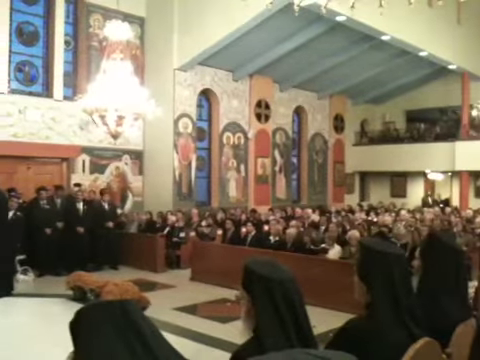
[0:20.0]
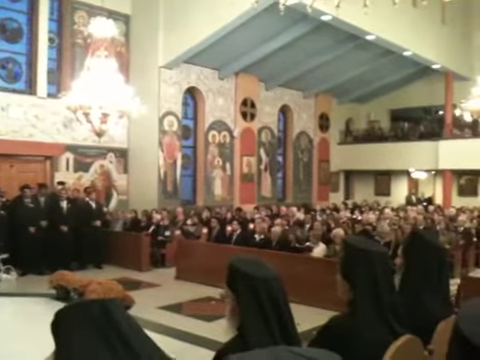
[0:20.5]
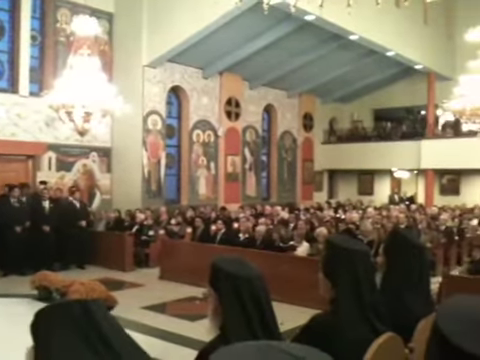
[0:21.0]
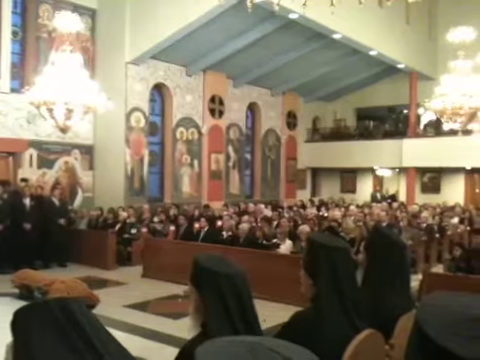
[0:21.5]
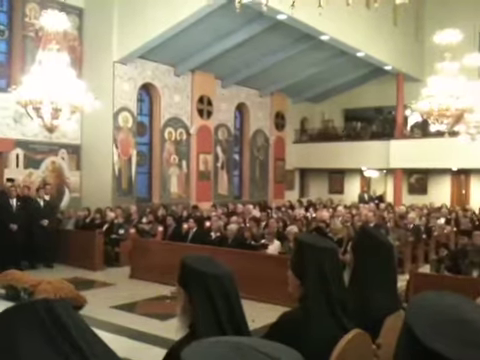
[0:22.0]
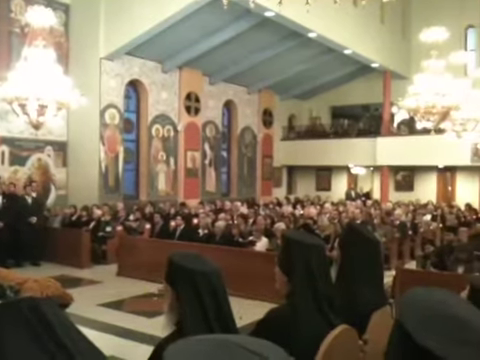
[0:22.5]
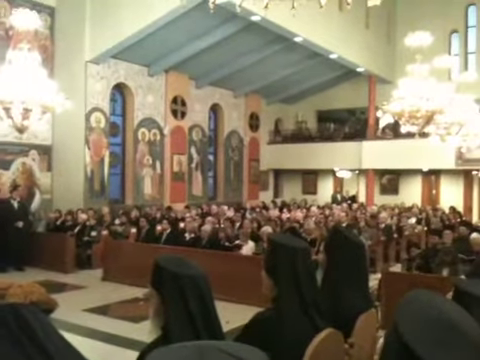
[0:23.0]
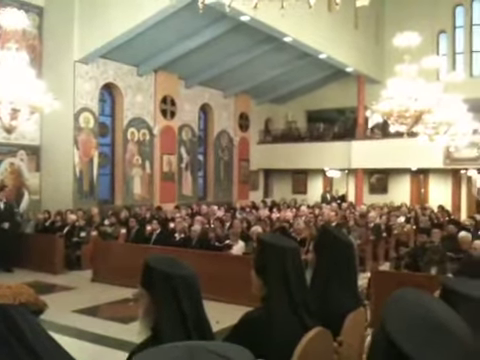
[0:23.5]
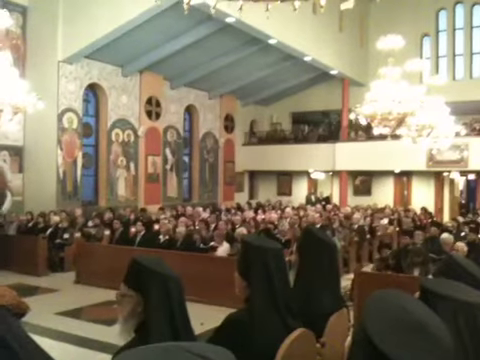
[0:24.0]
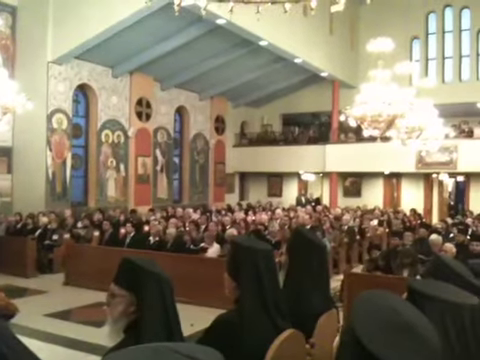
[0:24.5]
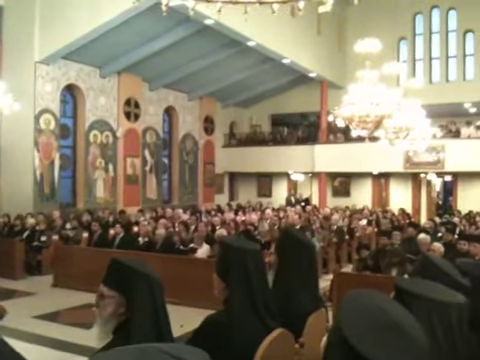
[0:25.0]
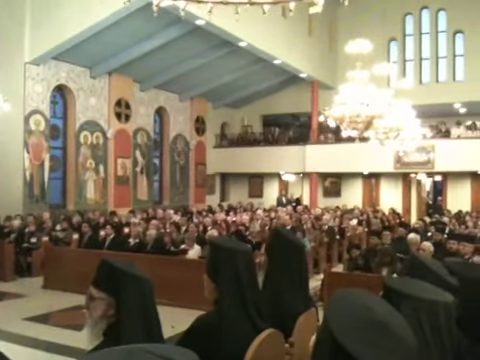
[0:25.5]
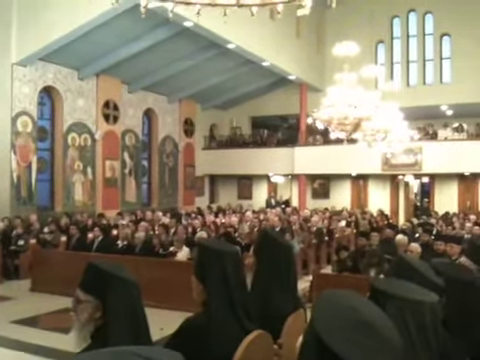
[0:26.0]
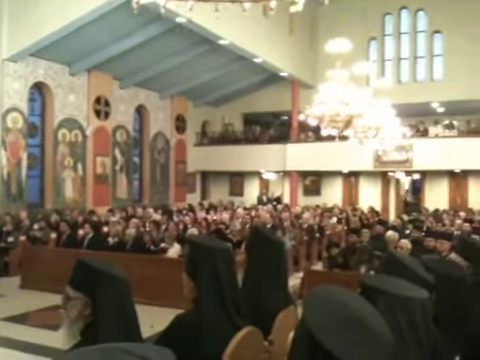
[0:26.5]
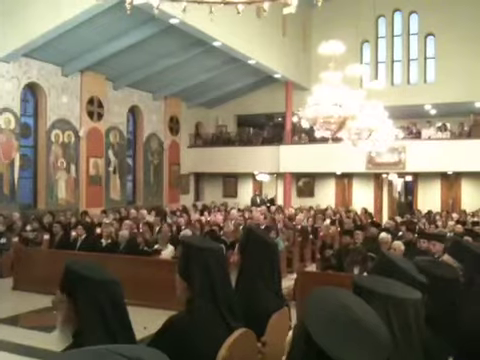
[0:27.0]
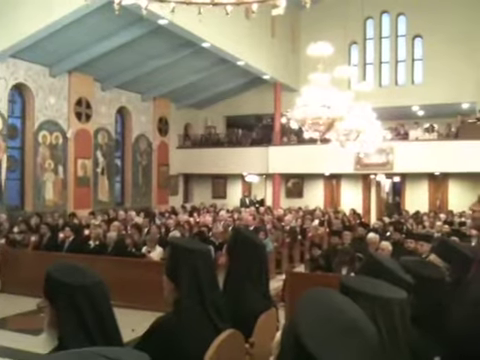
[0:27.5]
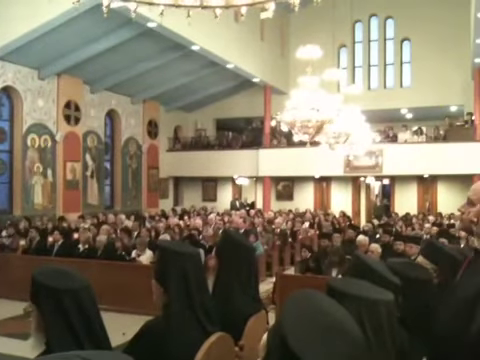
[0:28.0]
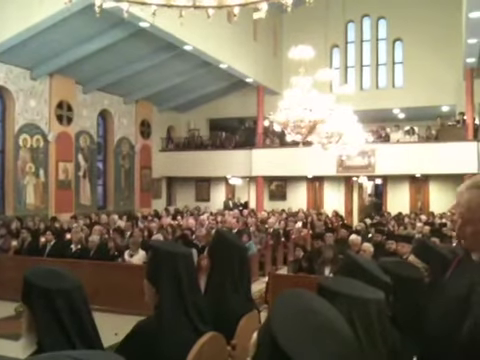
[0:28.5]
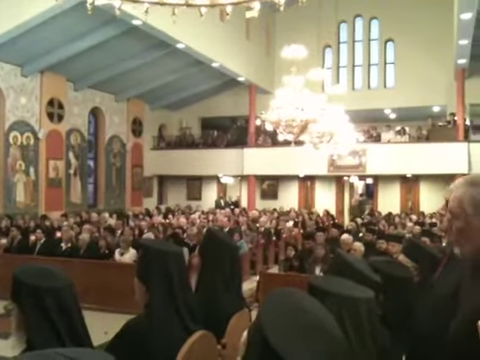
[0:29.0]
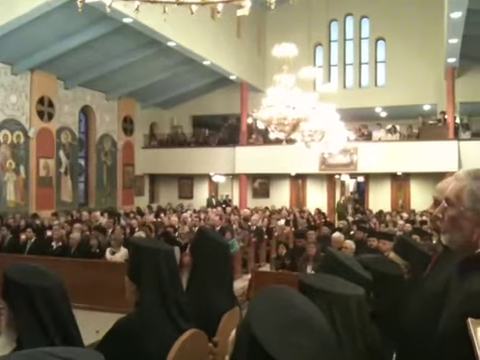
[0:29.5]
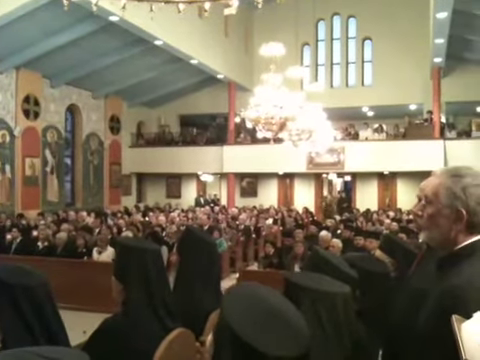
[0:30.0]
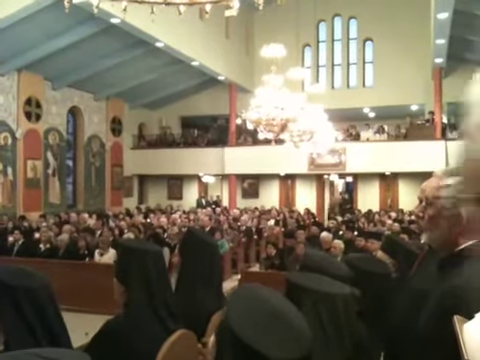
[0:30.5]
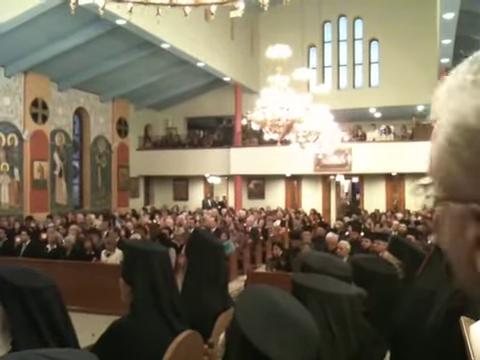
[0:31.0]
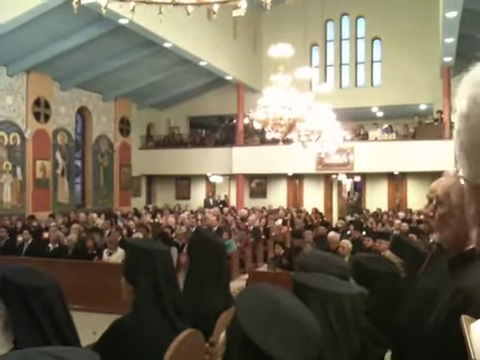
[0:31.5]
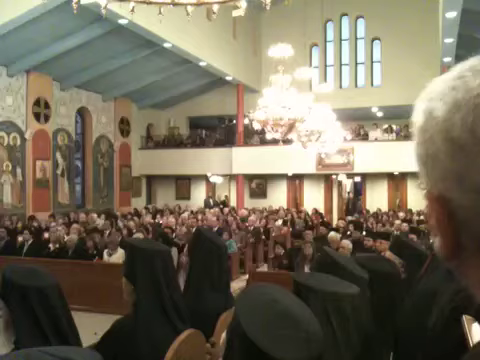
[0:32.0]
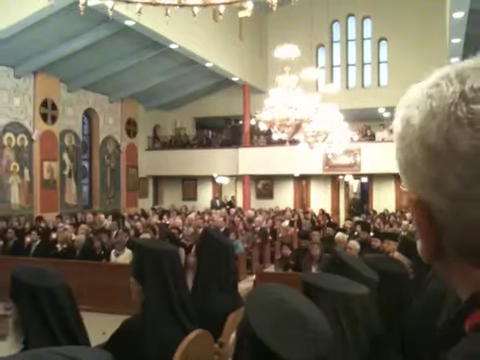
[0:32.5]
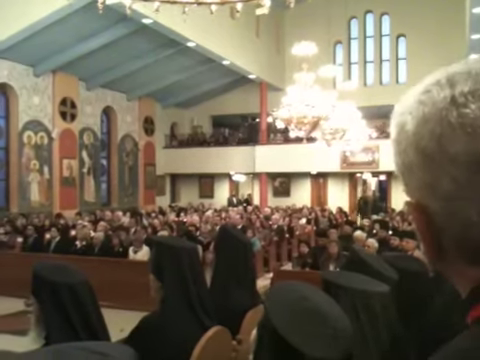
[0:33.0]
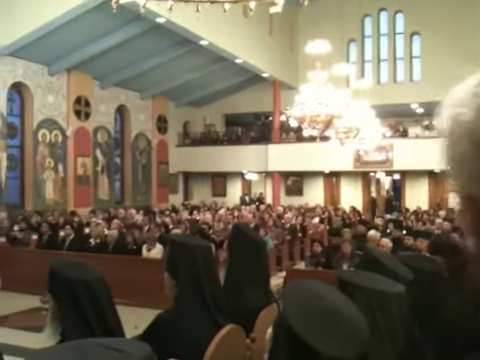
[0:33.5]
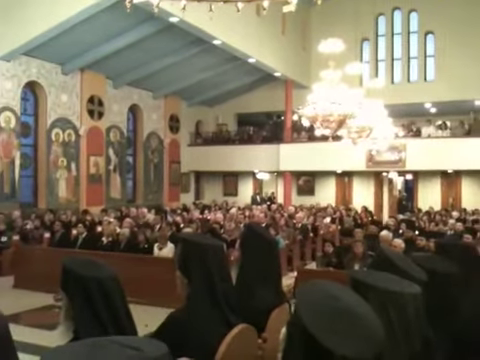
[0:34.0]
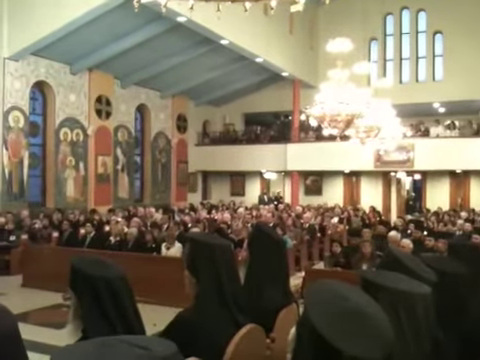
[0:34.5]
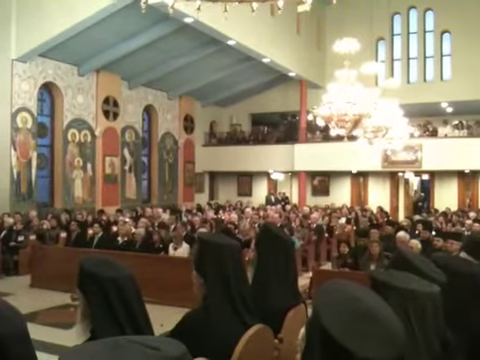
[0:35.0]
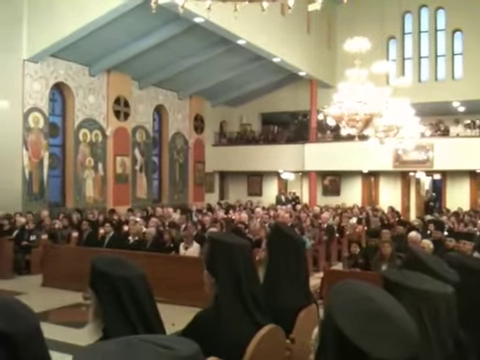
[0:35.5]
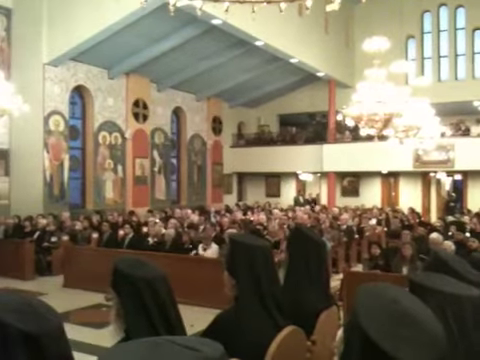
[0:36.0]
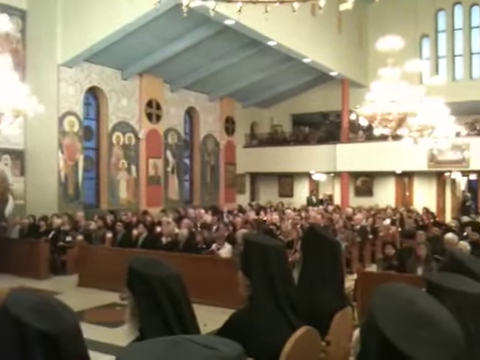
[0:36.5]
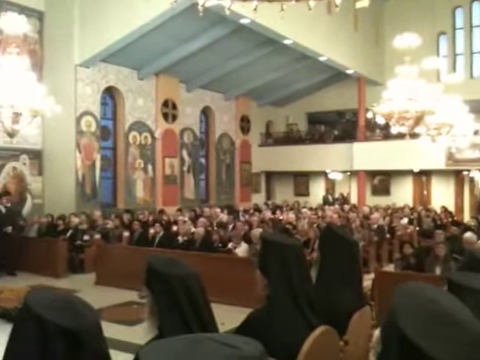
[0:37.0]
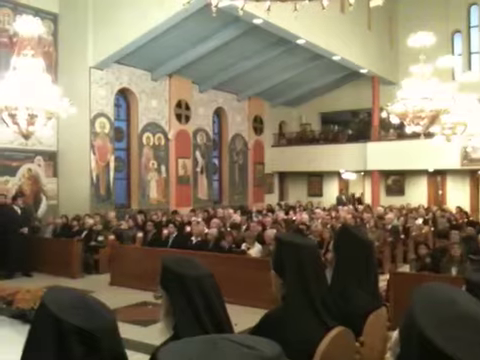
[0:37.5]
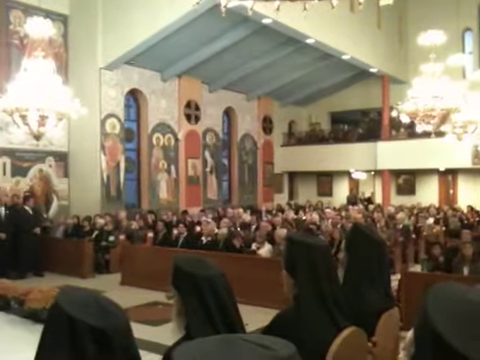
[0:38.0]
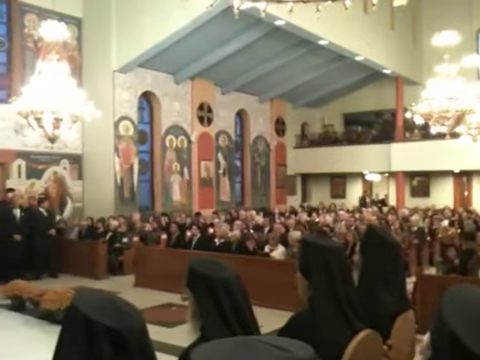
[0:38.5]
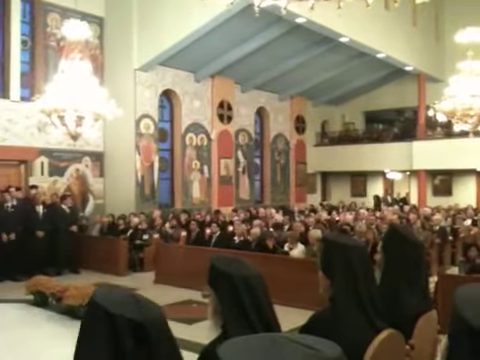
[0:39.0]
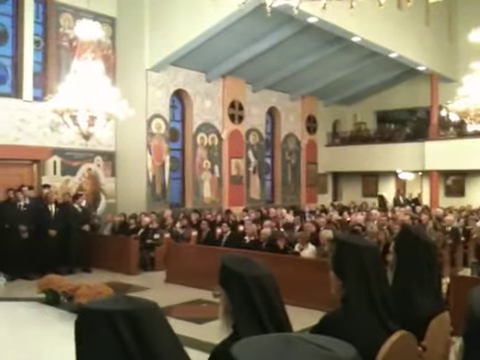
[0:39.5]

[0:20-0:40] The camera pans a bit, giving a better view from inside the congregants' area of the church and more of the seated crowd watching the ceremony. The gathering is maybe about 75 people, and a small balcony holds some additional people. The crowd looks to be very conservative and religious; everyone is dressed in dark suits and rather muted colors. A number of stained glass windows and mosaics are on the walls. The church seems reminiscent of a Greek Orthodox church, and the robes and vestments of the officiating figures appear in keeping with that. Female figures, seated on the right-hand side of the room from the viewer's perspective, are also observing the ceremony; they all wear black robes and head coverings, possibly indicating that they are nuns.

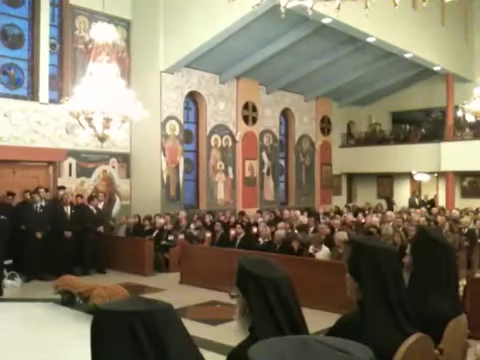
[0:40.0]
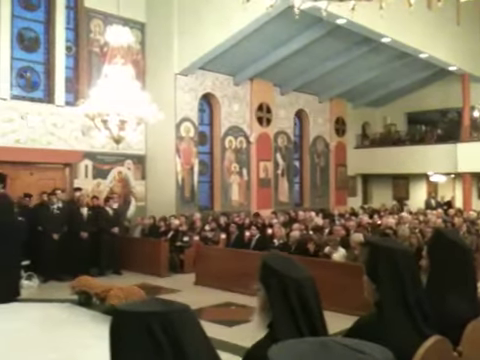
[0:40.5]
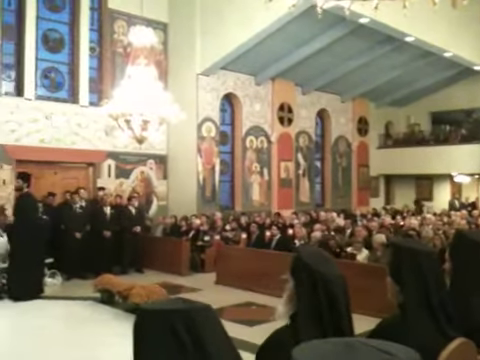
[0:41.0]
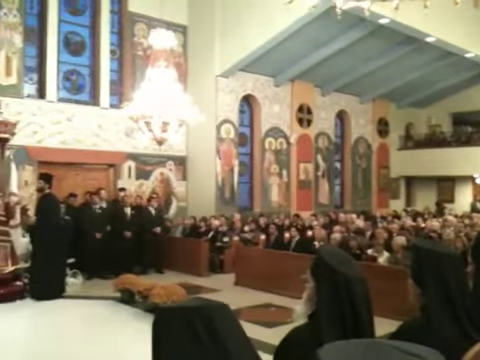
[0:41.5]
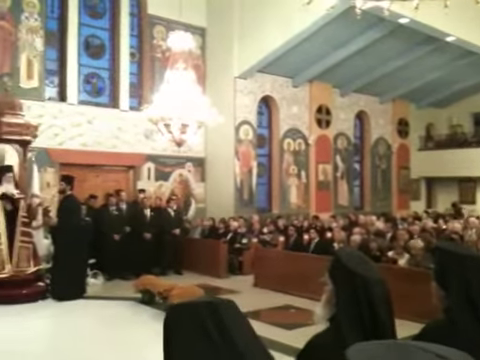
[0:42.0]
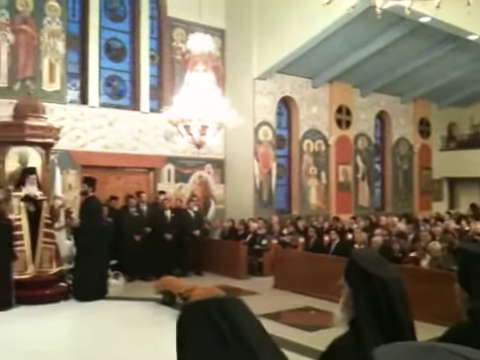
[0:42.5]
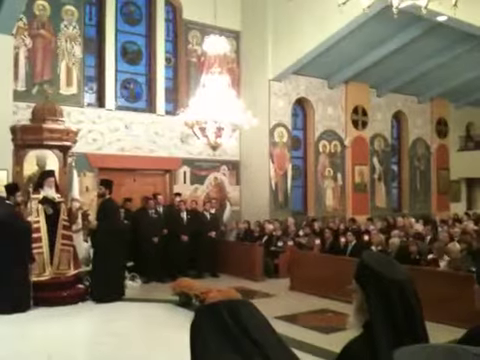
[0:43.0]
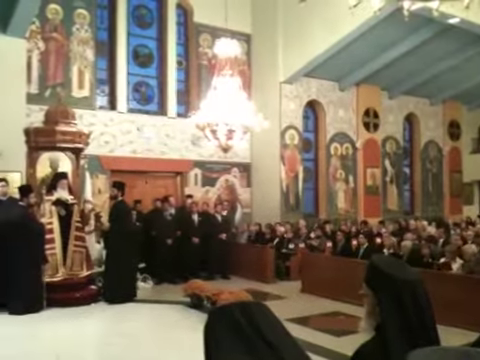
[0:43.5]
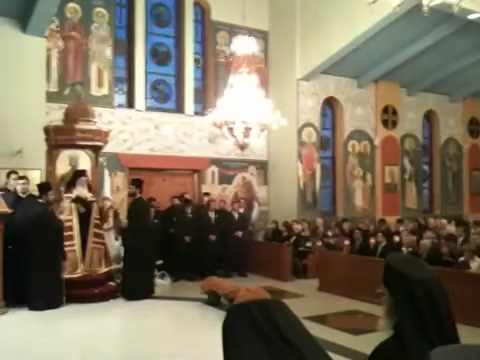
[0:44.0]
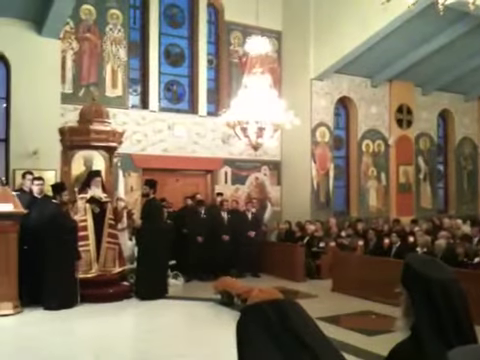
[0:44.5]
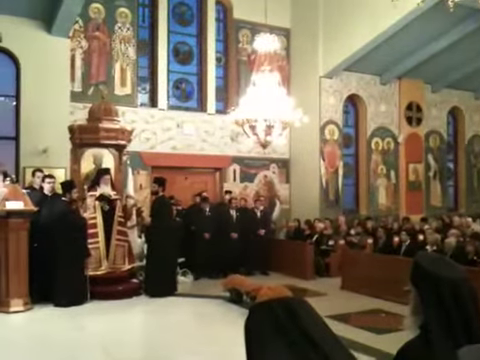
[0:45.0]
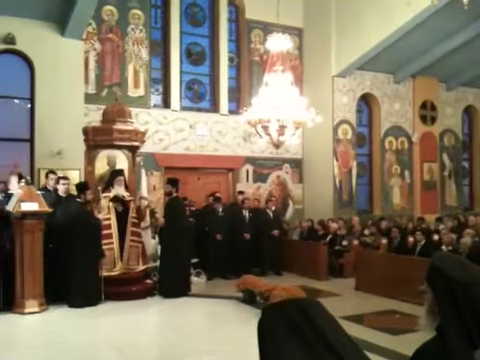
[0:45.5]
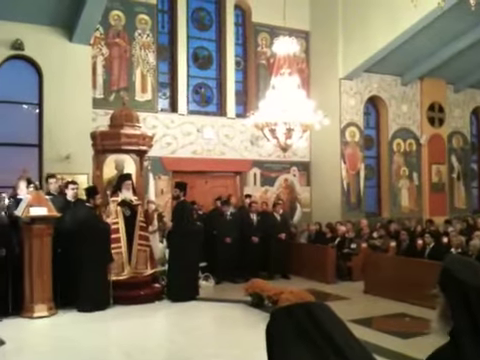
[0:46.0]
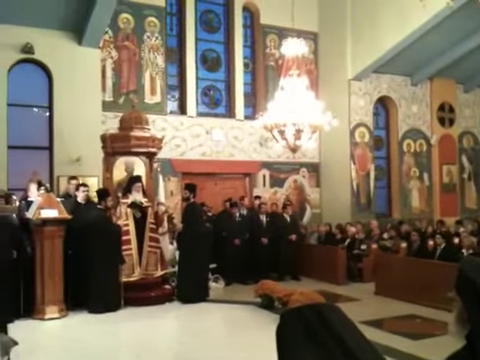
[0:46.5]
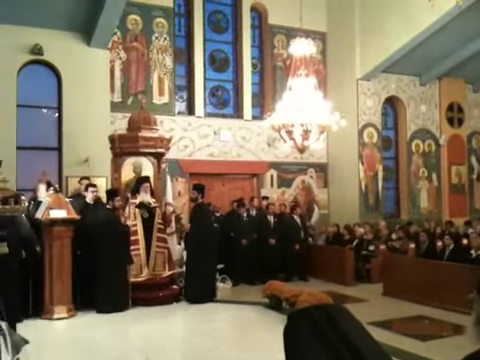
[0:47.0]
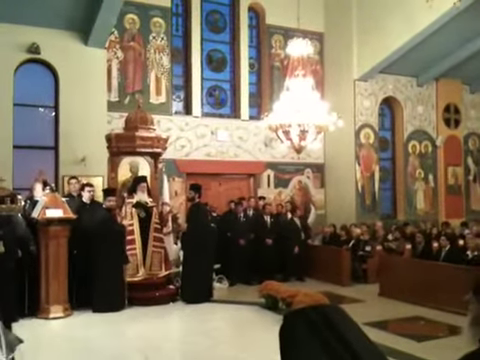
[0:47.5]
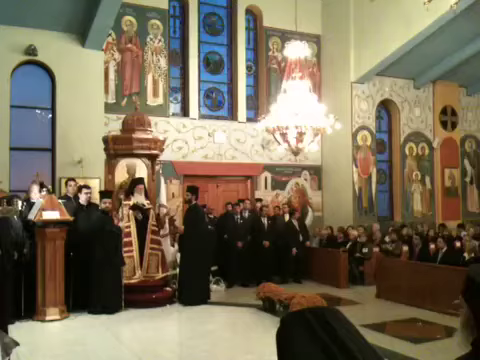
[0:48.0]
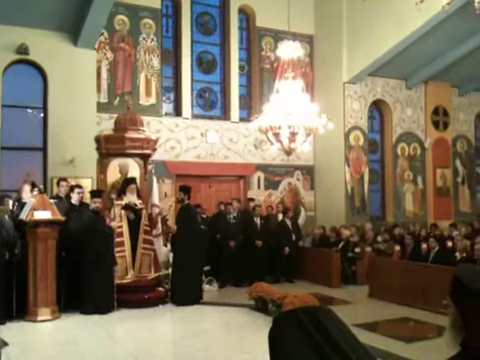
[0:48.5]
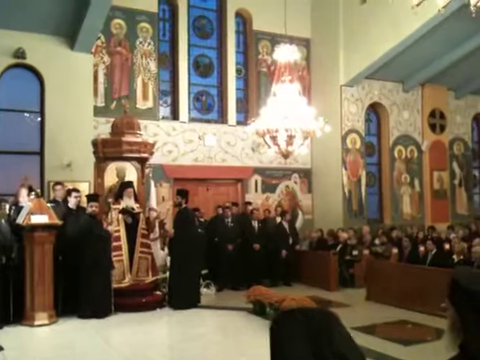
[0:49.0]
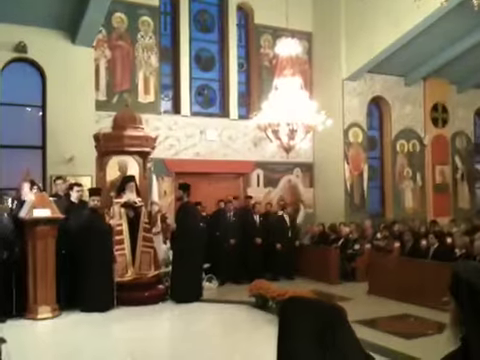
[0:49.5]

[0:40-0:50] The view moves a bit closer to where the officiants stand in the Orthodox-type church. The camera is panned back toward the left, focusing on the priest or rabbi officiating, who stands inside a little dome-type area. He wears black robes and is covered with a long, heavily embroidered ceremonial scarf of some type that reaches the floor. Some apparently more junior members of the order are visible: young, dark-haired men in dark robes, some with their heads covered by small traditional hats. A group of young men stands in the doorway, all very solemn with their hands clasped in front of them; they wear no robes or vestments, just traditional Western-style black suits with ties.